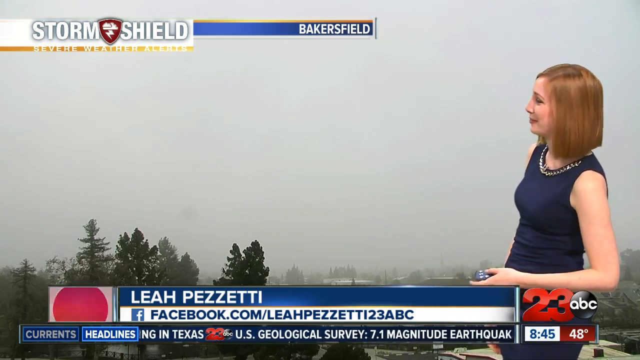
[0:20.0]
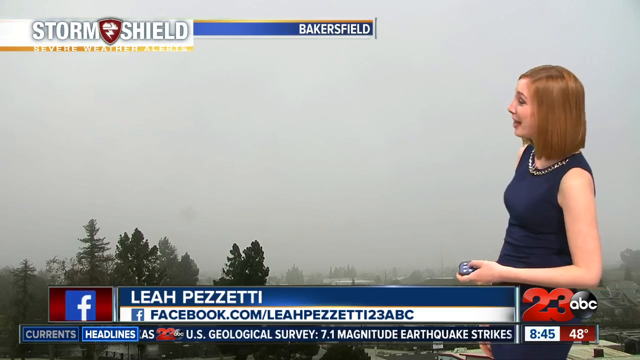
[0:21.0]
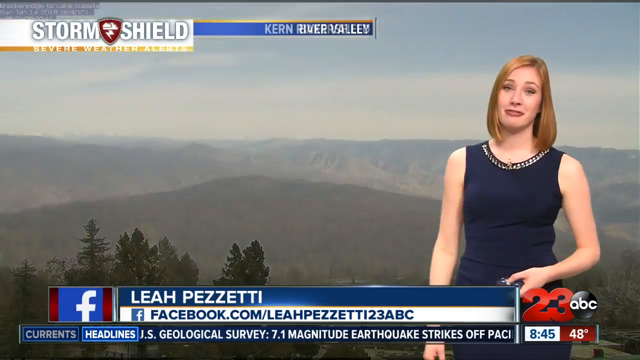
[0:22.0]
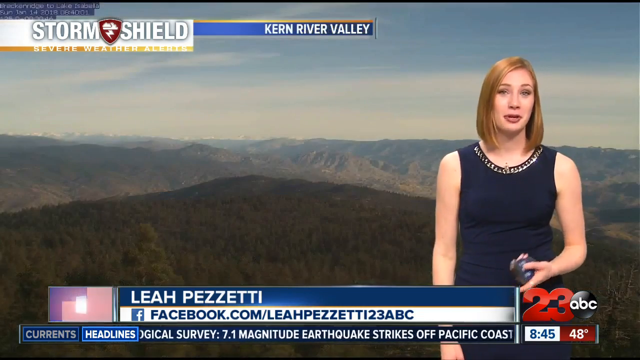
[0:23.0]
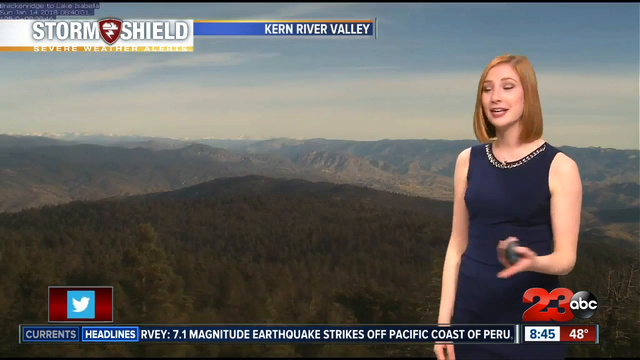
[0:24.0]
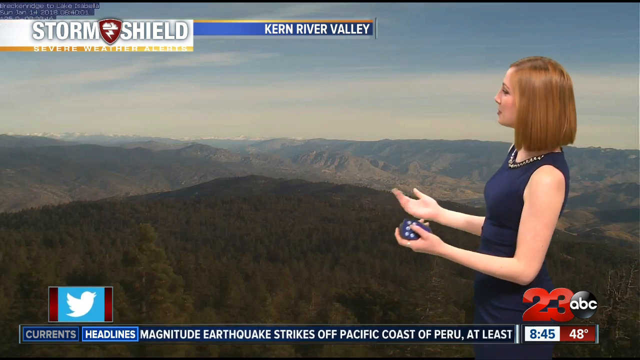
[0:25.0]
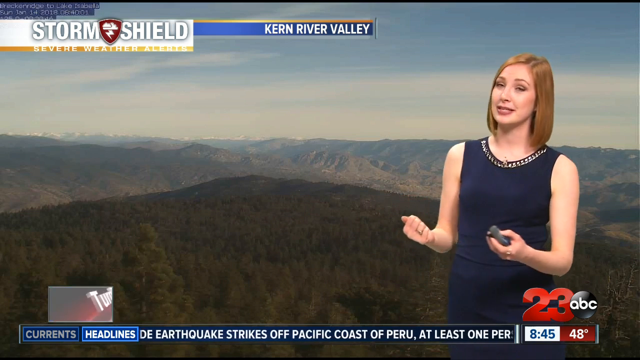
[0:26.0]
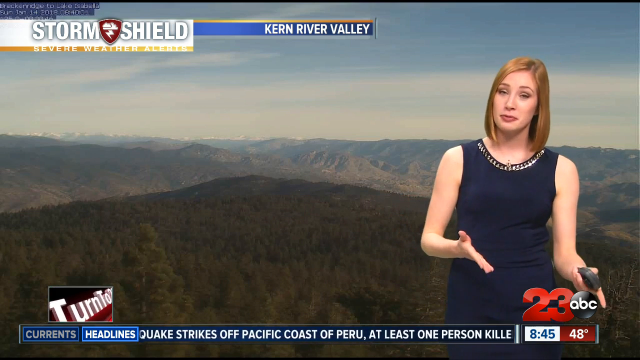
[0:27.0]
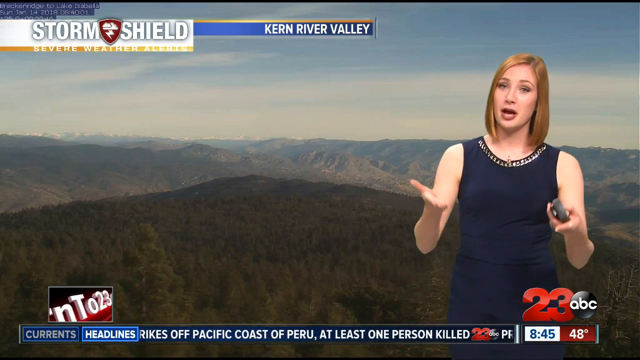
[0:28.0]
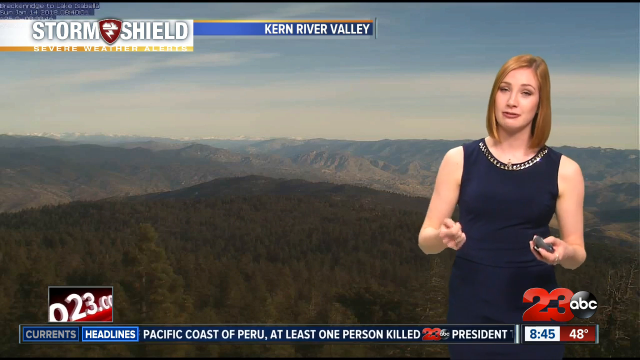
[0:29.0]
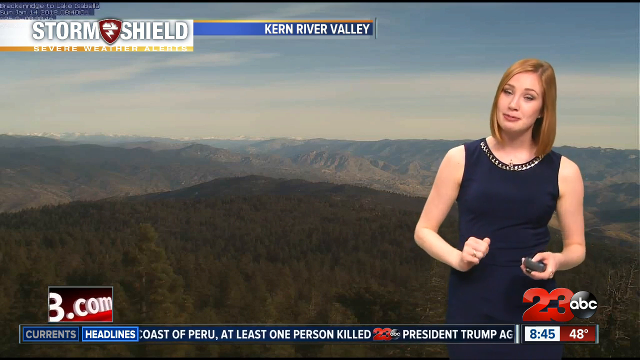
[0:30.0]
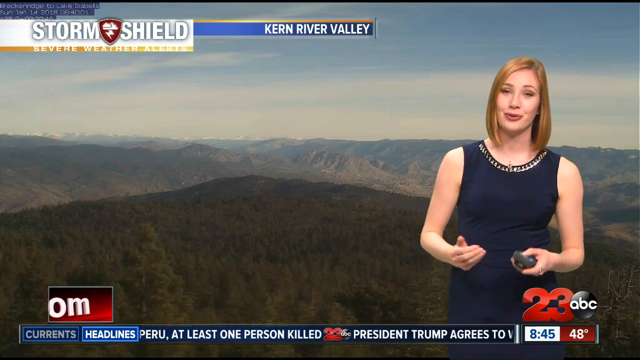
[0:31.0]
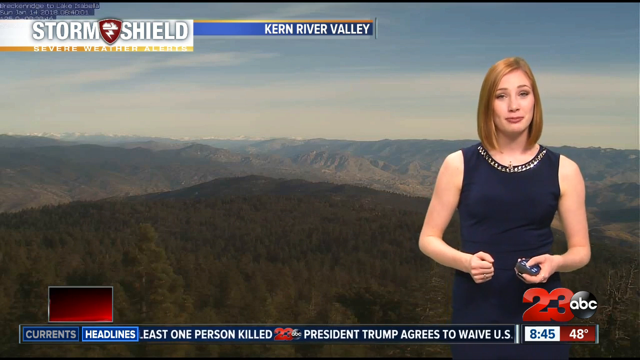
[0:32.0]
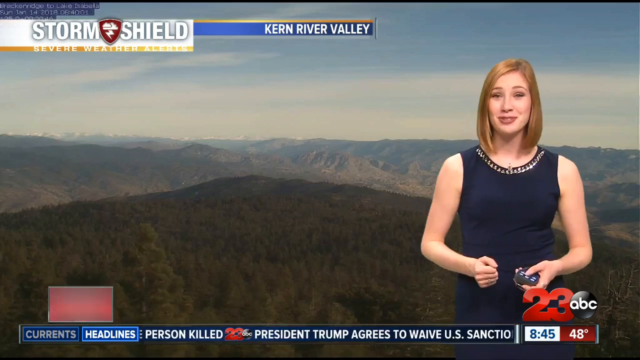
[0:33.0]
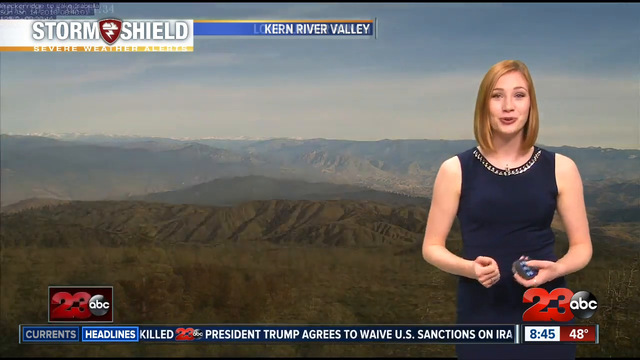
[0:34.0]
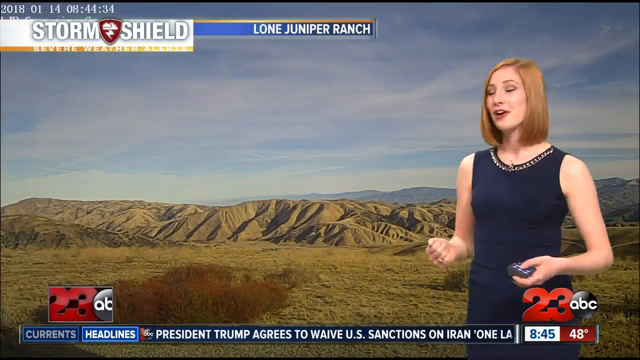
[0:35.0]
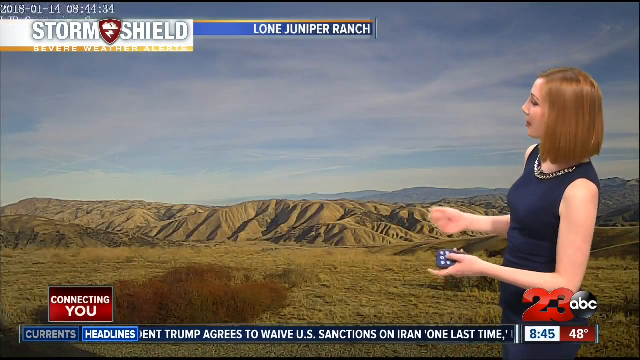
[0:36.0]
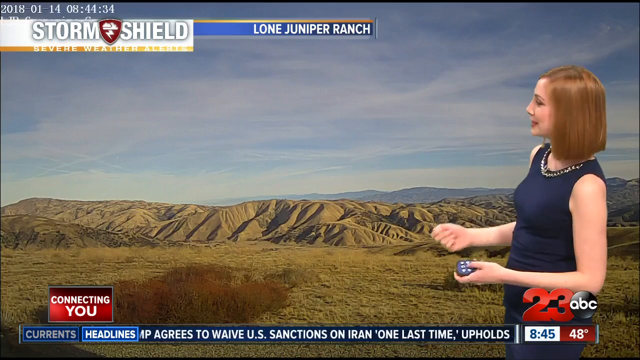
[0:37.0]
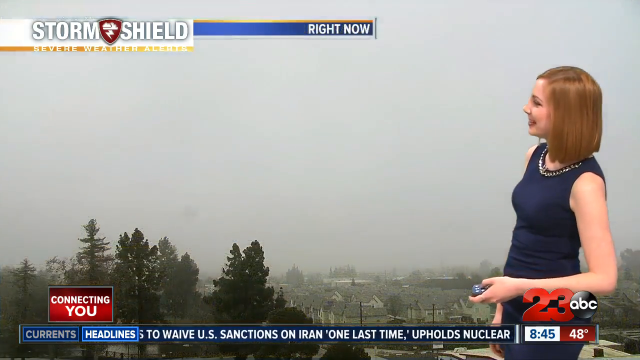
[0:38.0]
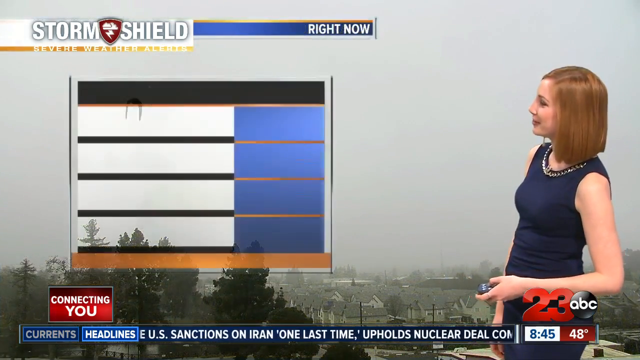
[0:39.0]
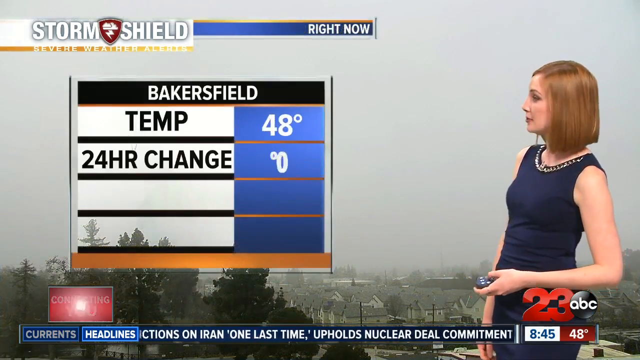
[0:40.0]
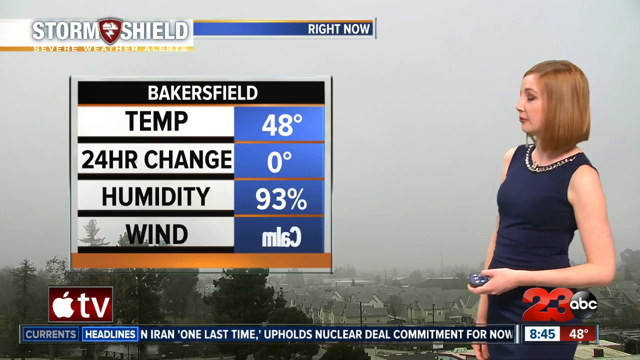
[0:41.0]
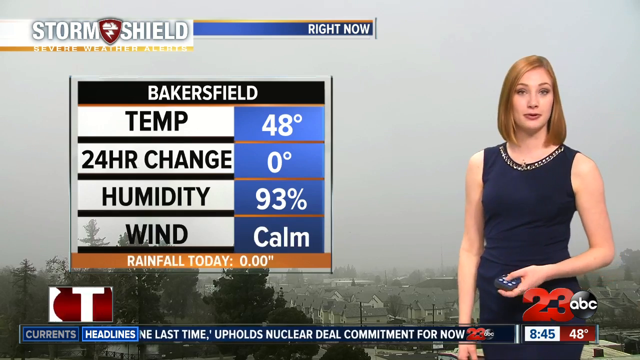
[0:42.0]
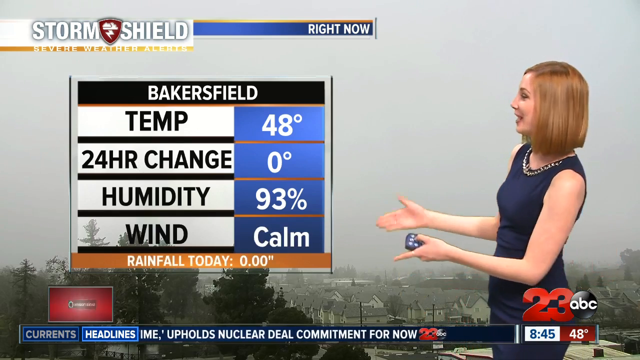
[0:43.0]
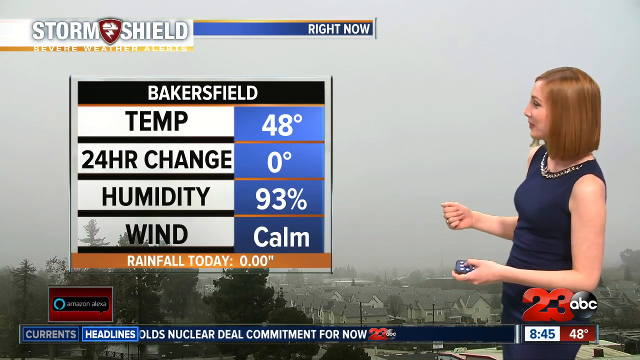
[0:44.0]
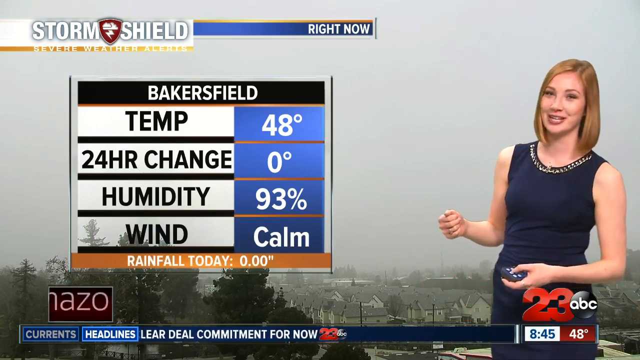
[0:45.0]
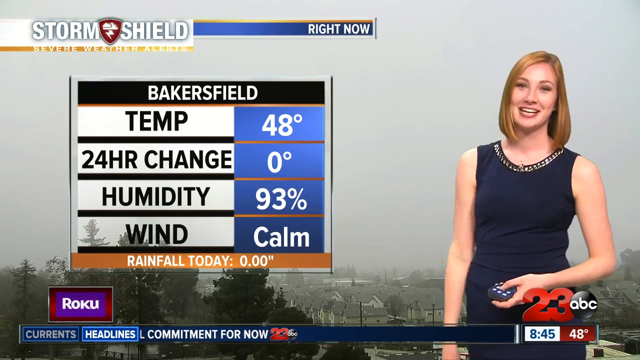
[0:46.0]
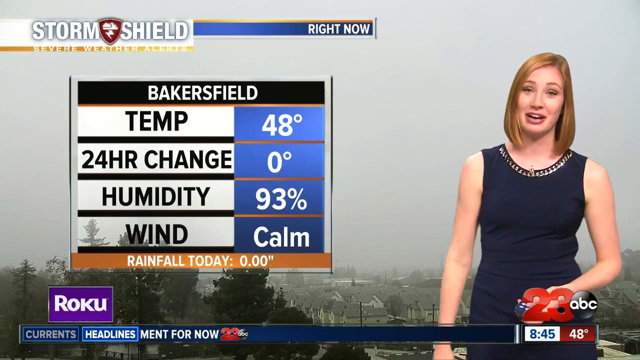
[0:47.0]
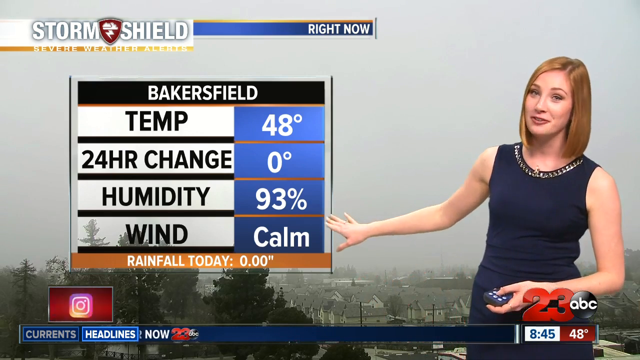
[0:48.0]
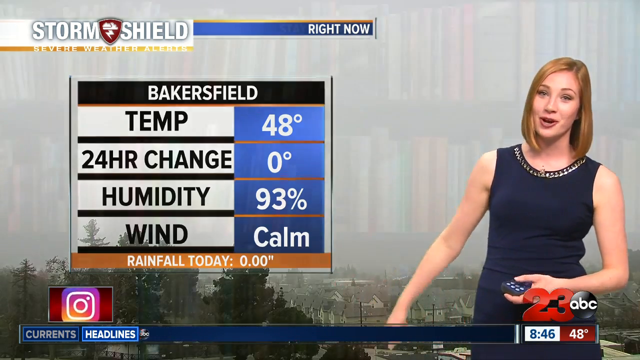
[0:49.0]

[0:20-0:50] The woman shows Karen River Valley, a mountain where the weather is a bit stormy, then moves to Lone Juniper Ranch, where the day on the mountain seems sunny. Next she shows the current forecast at Backer Fields: the temperature seems to be 48 degrees, the 24-hour change is zero degrees, humidity is 93%, the wind is calm, and rainfall today is zero. She gestures with her hands as the screen changes to different cities. She is then shown in a room, standing in front of a bookshelf filled with books of different colours, and as she continues the forecast she looks back at the bookshelf.